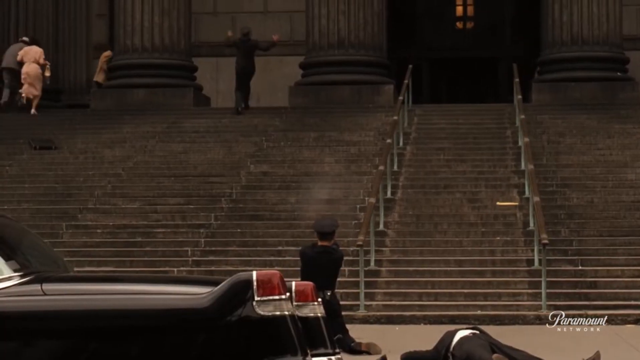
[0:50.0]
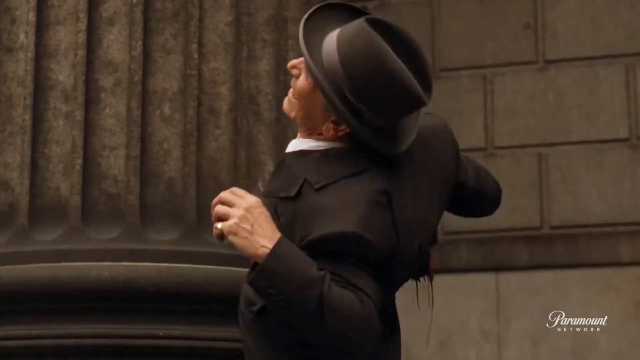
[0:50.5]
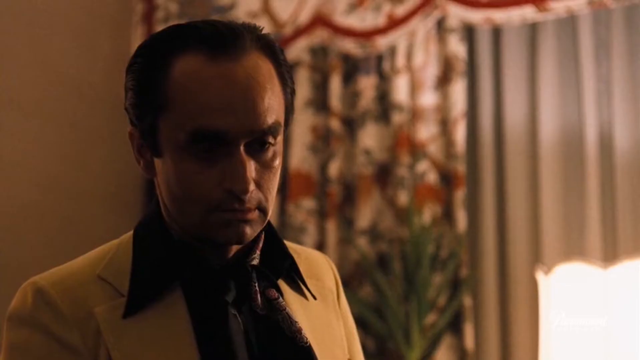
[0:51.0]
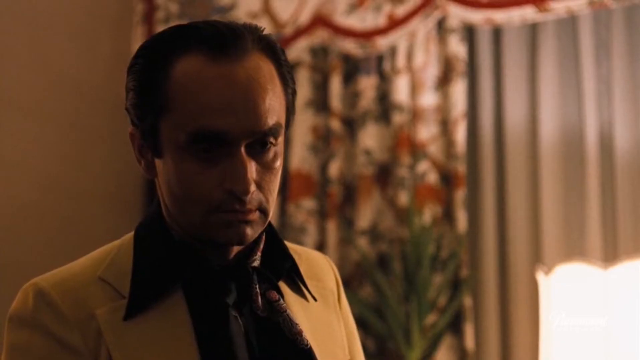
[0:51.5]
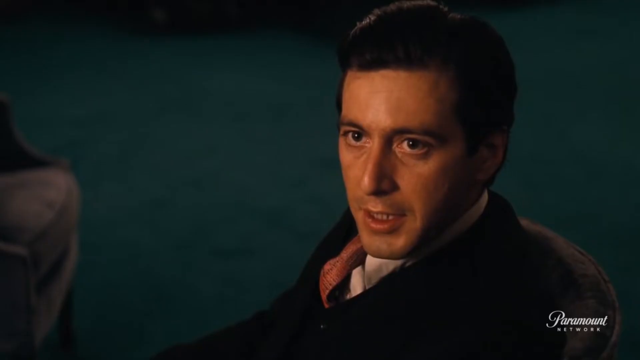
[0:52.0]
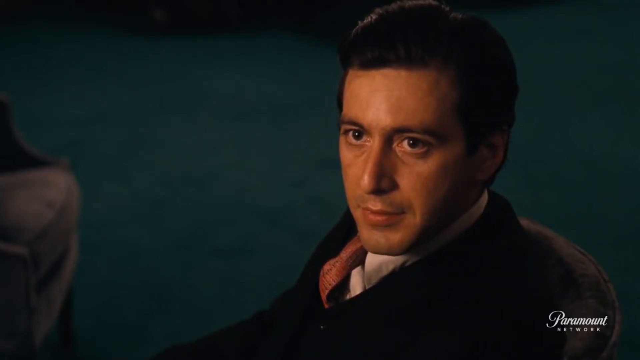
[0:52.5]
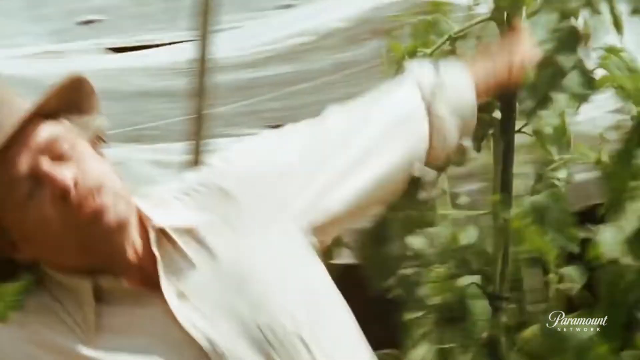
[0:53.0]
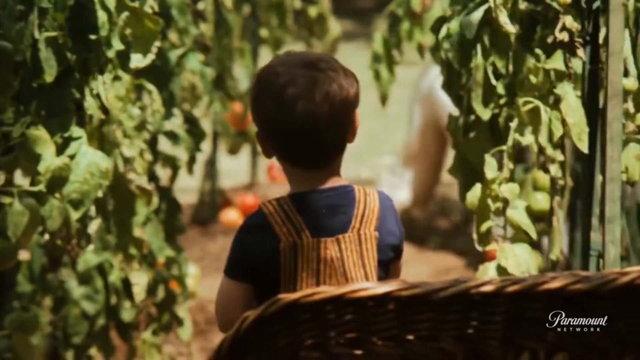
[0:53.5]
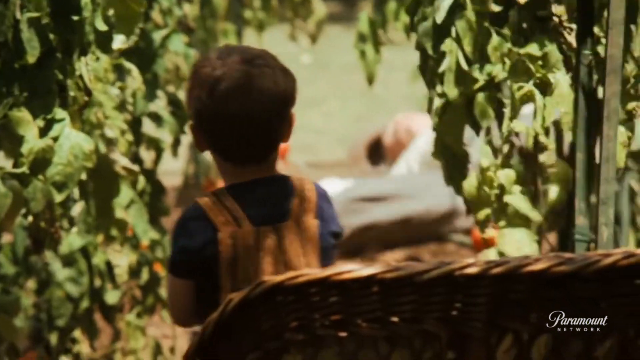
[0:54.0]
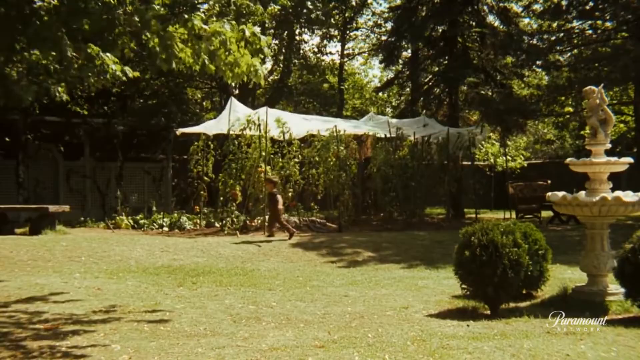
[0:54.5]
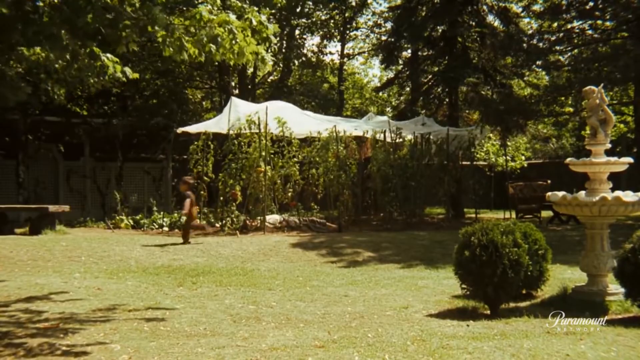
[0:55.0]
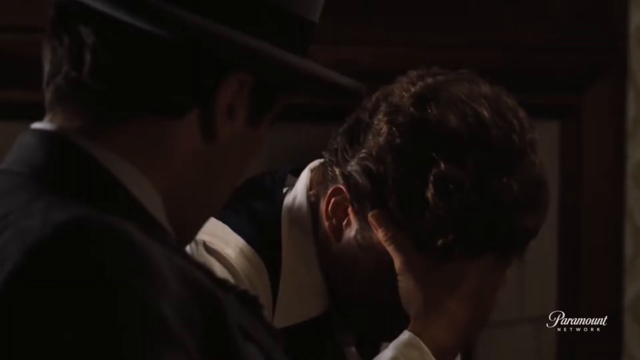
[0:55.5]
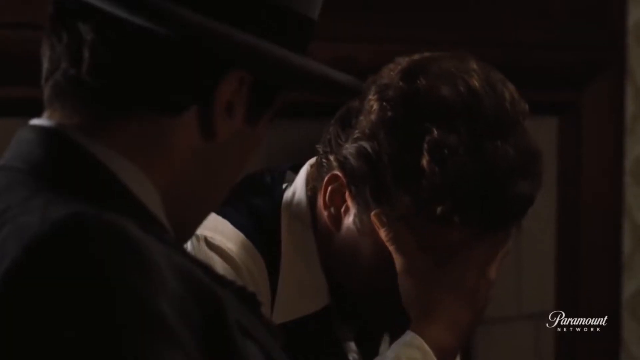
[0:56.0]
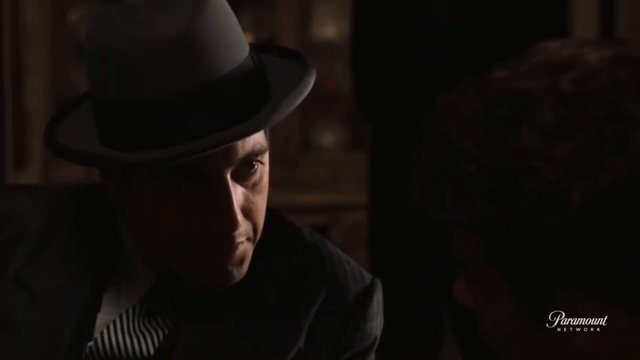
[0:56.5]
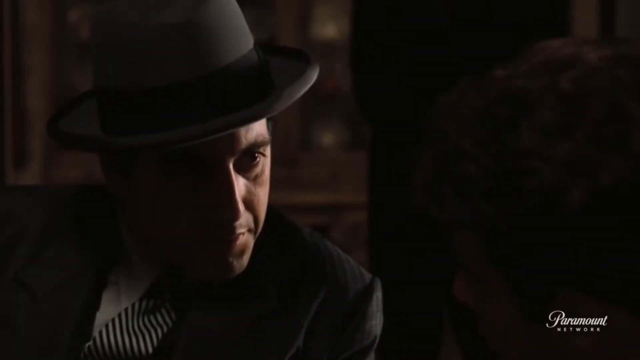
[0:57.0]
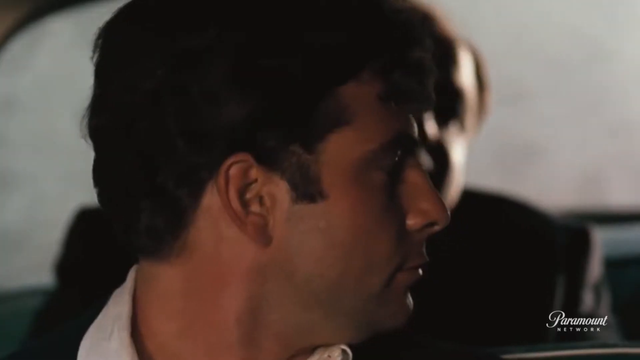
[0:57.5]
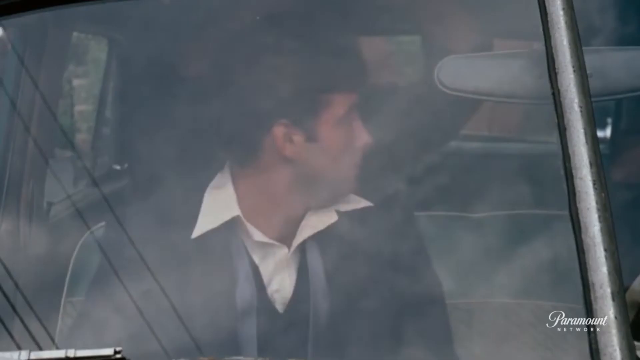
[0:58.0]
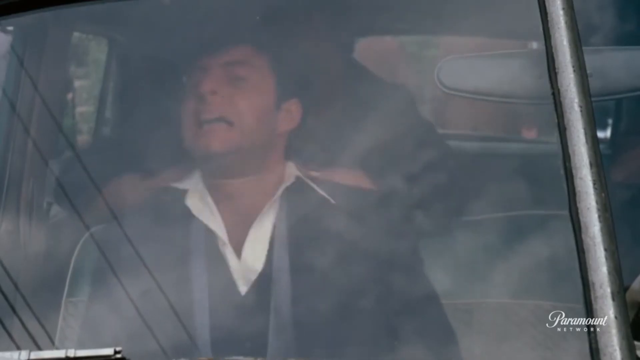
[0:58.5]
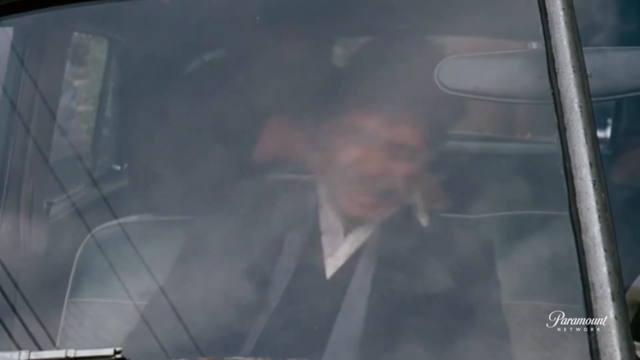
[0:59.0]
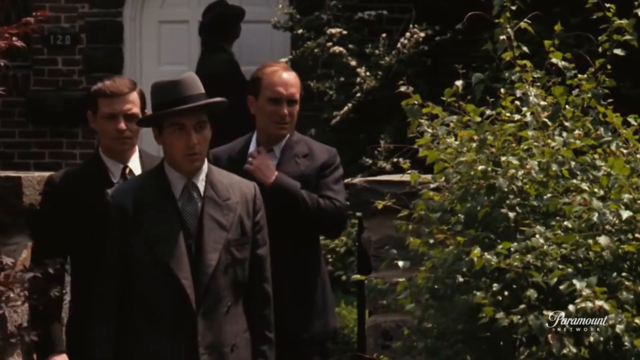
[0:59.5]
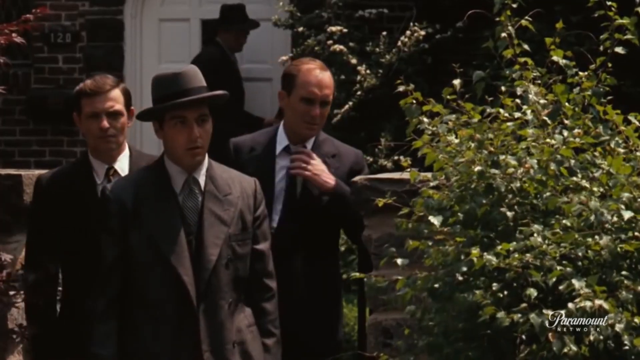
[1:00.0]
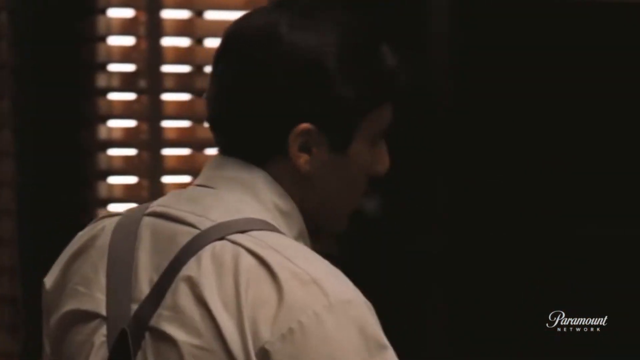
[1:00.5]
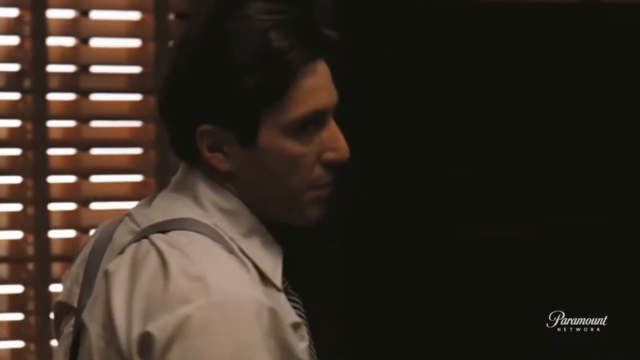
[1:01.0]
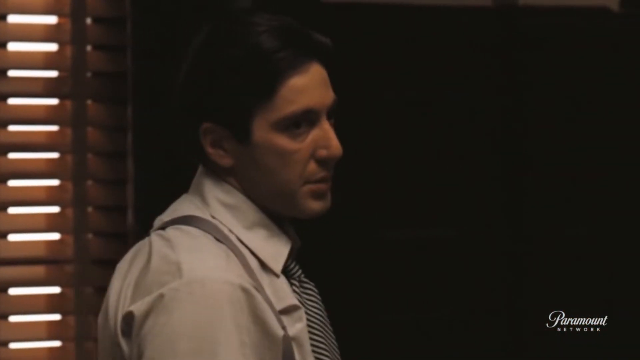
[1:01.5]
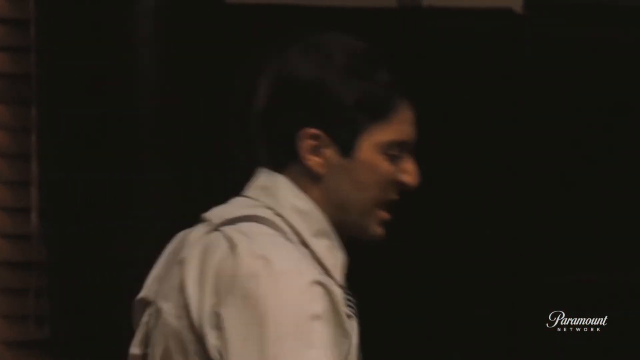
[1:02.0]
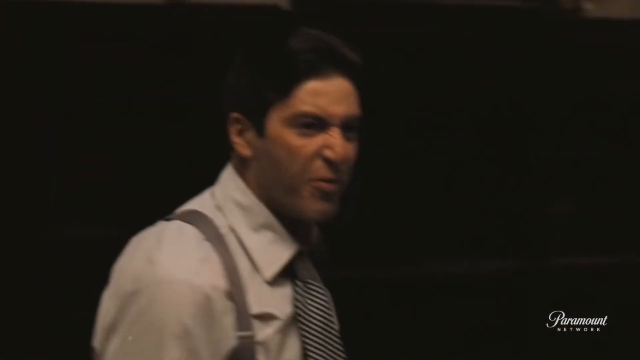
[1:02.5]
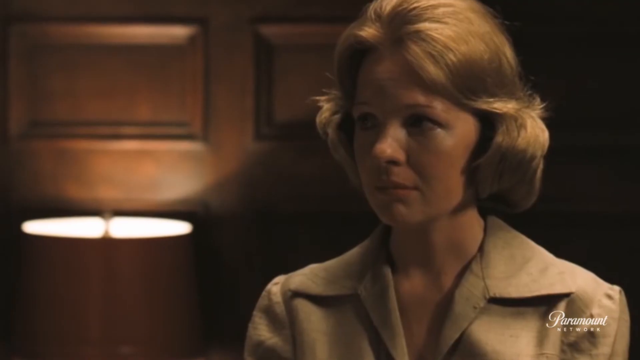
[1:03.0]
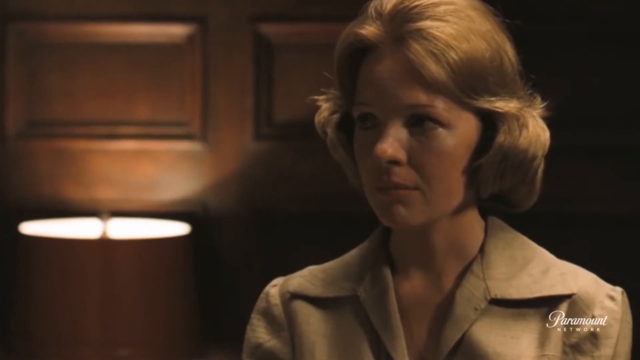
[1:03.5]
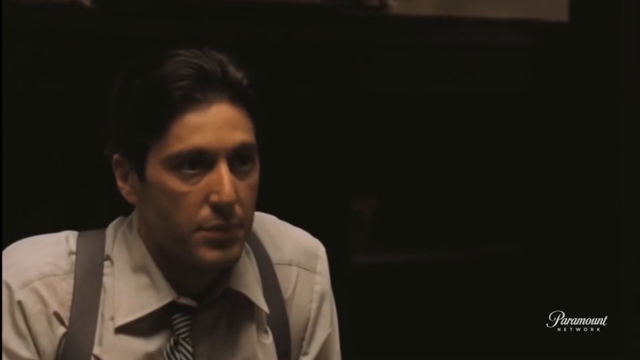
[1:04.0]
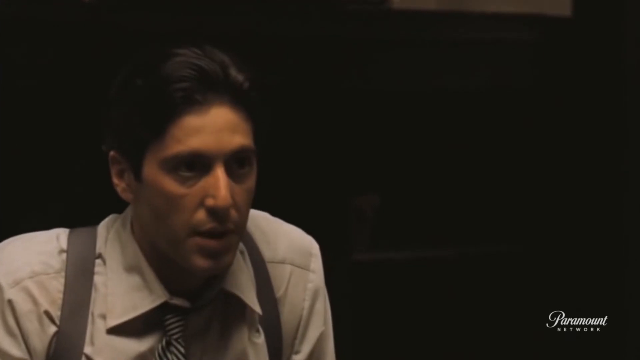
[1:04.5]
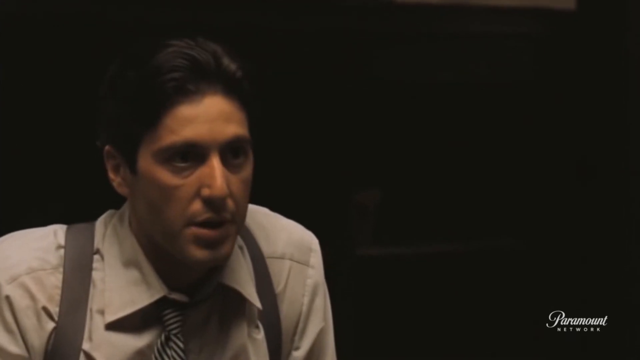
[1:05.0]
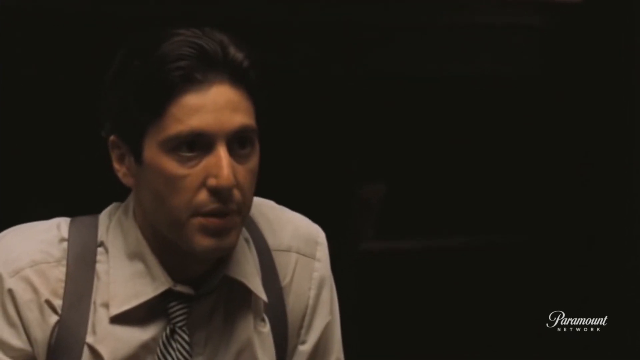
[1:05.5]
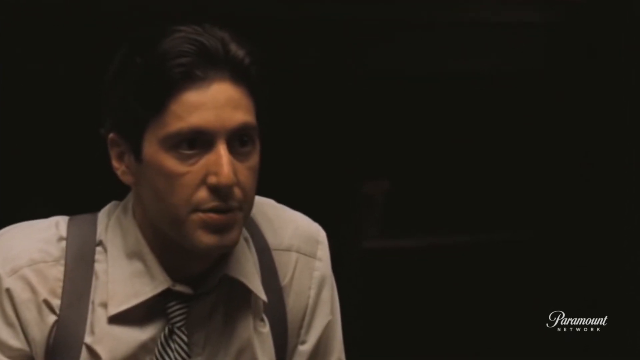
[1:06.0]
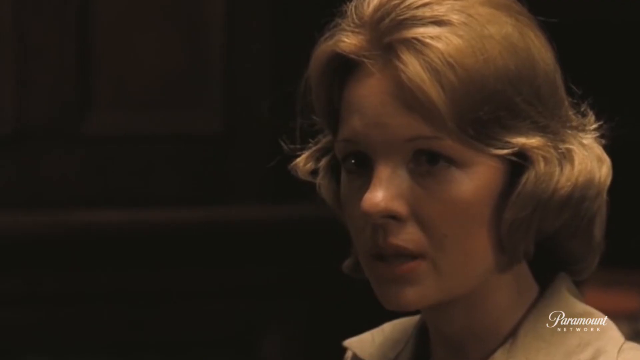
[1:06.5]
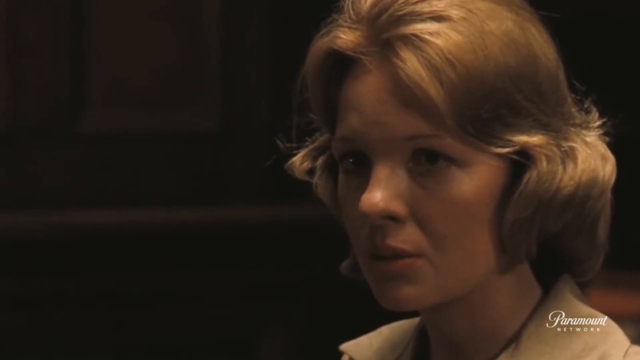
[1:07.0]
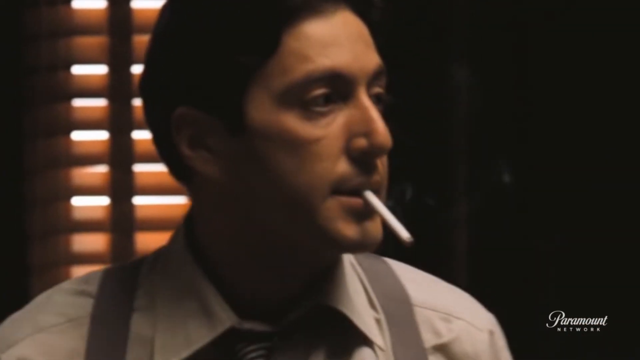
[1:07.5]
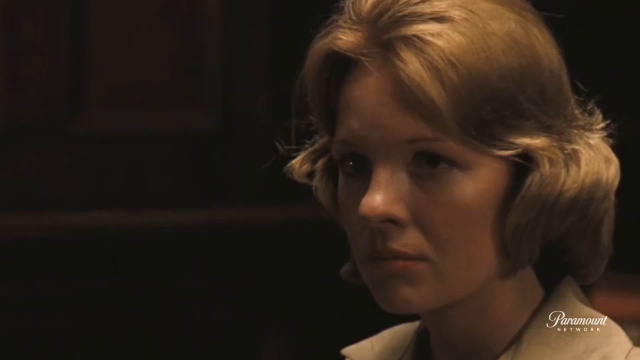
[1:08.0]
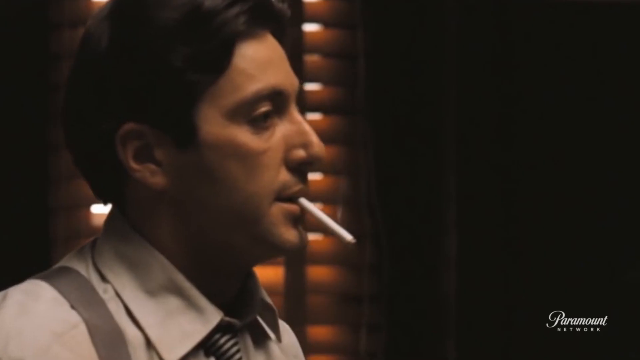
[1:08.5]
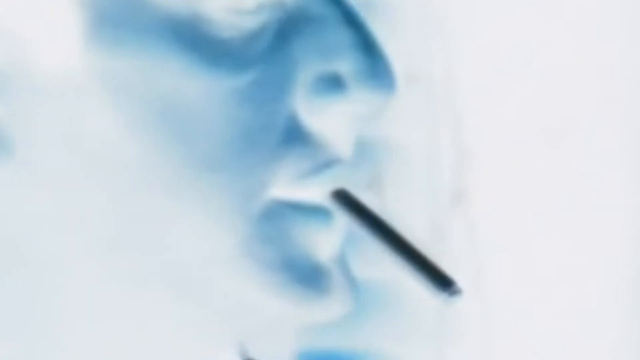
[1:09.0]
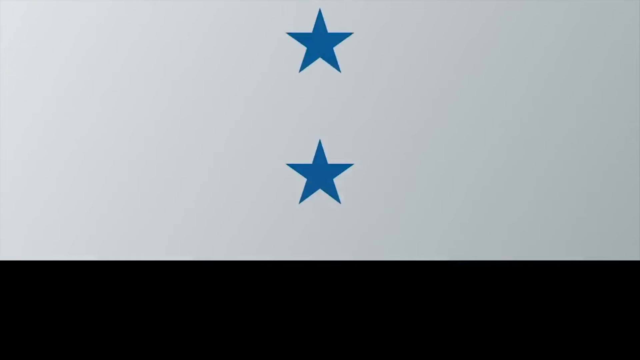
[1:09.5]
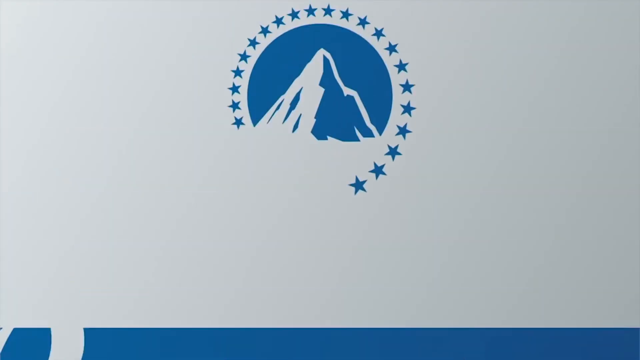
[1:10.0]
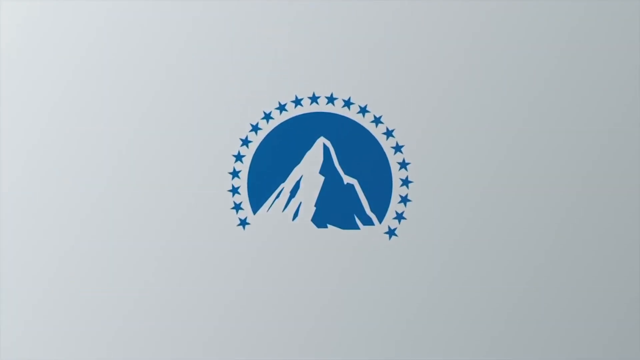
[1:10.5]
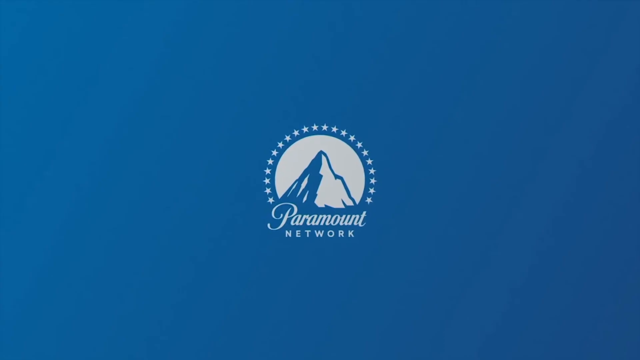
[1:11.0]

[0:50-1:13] Outside a building with stairs, a person shoots at someone running on the stairs as the audience runs; the man, who wears a suit and a cowboy-like hat, is shot in the back. A man in a yellow coat talks with a seated man in a suit. A farmer and his child are outside preparing a tomato garden when the farmer is shot and falls down, and the kids run. A "14" is visible on the compound. A man touches his face in disbelief, then converses with another man. People ride in a vehicle, and a person is strangled in the vehicle, with a person seated in the back. Three men in suits appear, and a man in a suit talks furiously to a lady, with a lamp casting light upwards. The man and the lady continue their conversation, the man now smoking a cigarette. The video ends with the word "Paramount", the Paramount logo, and then "Paramount Network".